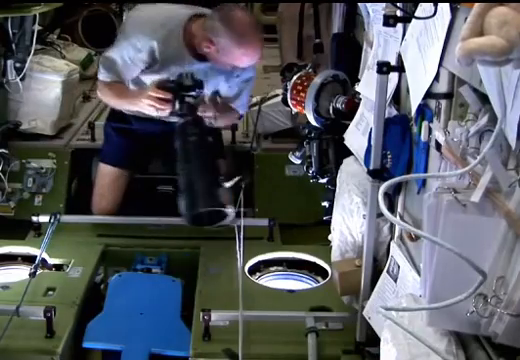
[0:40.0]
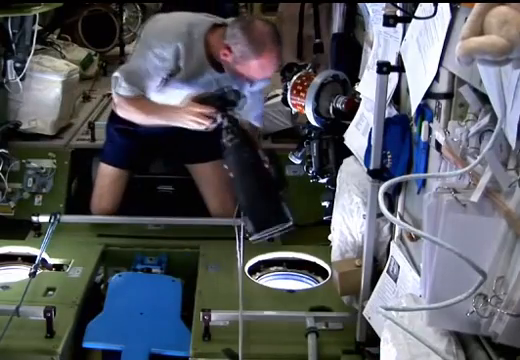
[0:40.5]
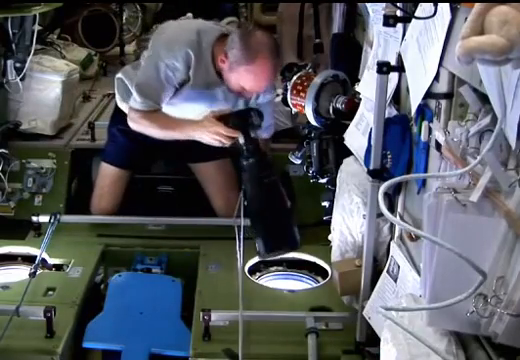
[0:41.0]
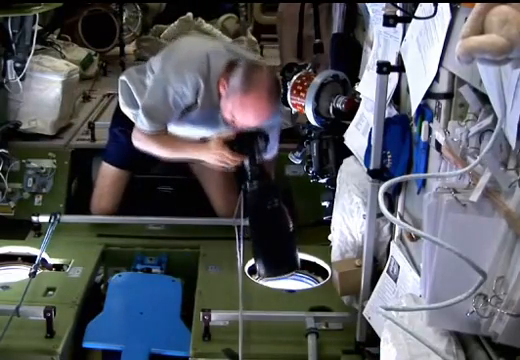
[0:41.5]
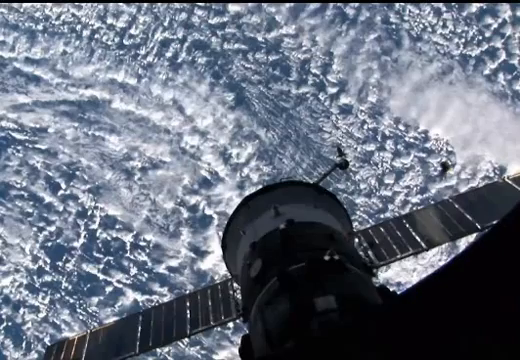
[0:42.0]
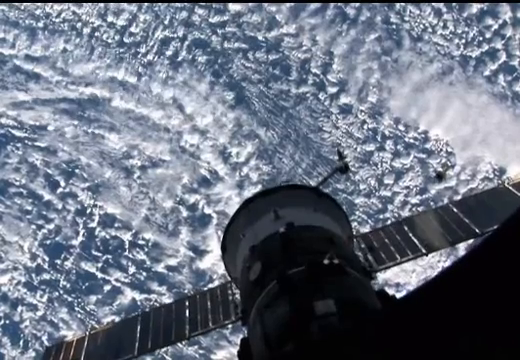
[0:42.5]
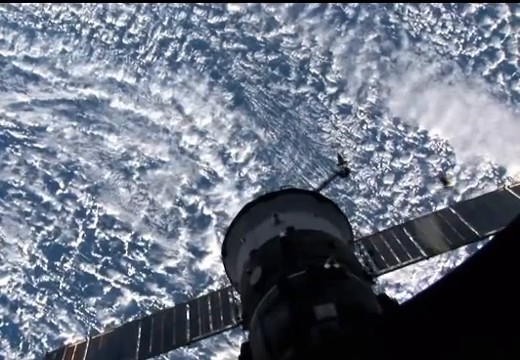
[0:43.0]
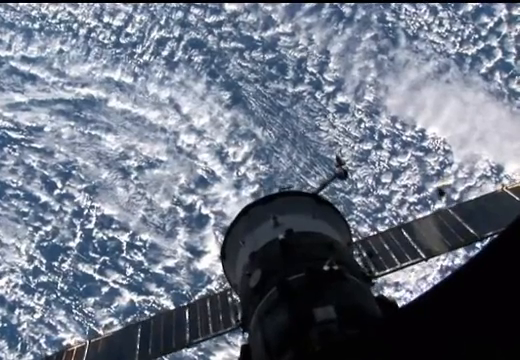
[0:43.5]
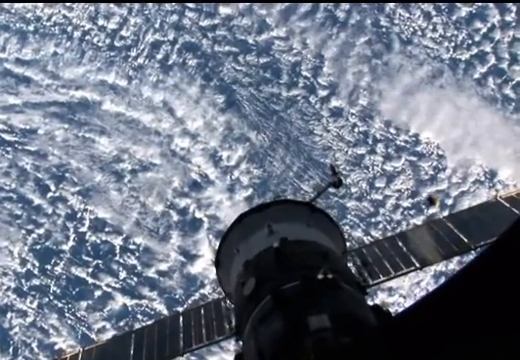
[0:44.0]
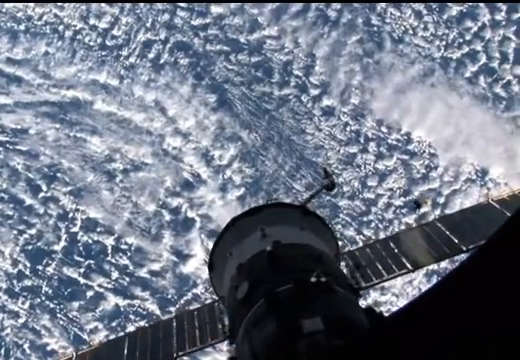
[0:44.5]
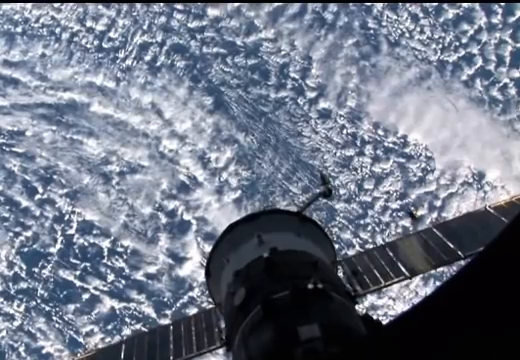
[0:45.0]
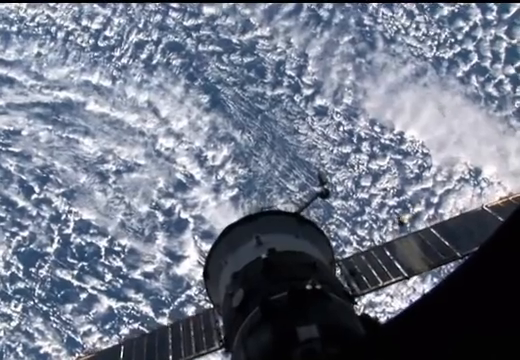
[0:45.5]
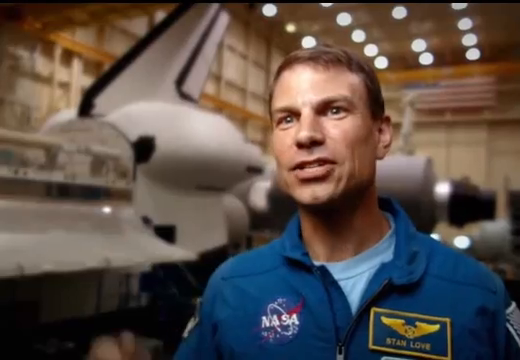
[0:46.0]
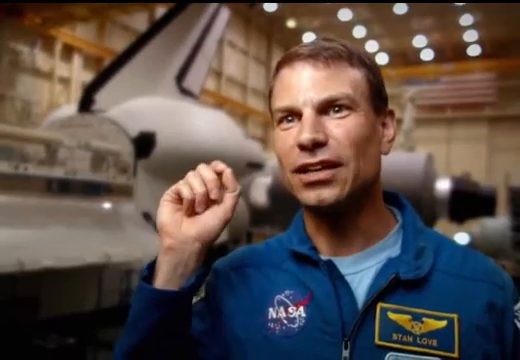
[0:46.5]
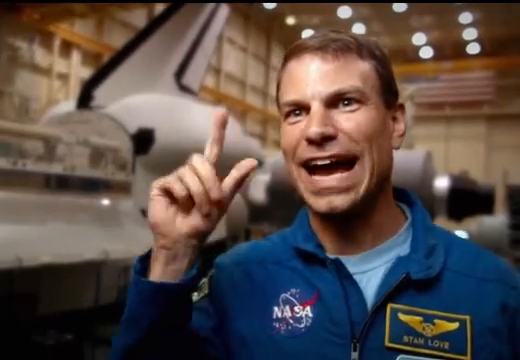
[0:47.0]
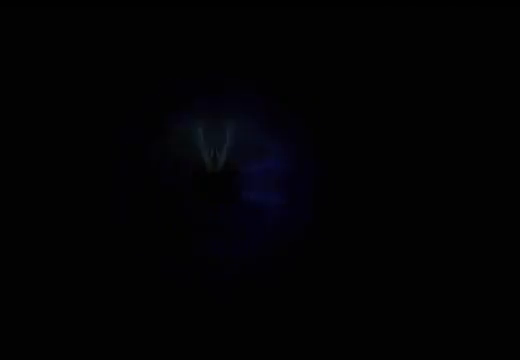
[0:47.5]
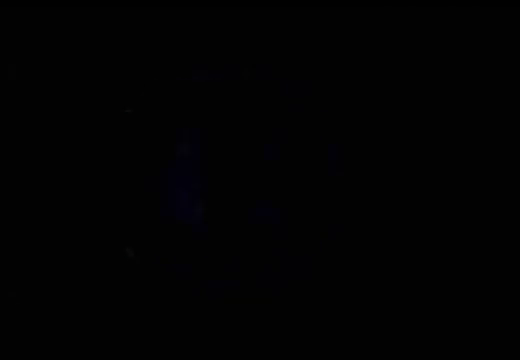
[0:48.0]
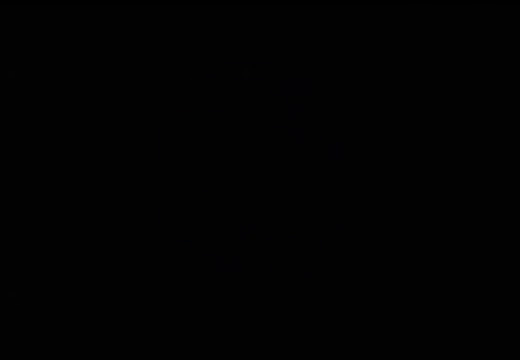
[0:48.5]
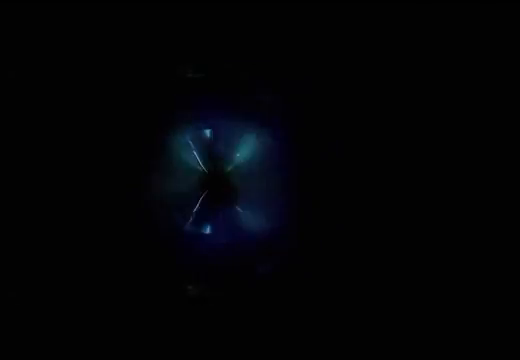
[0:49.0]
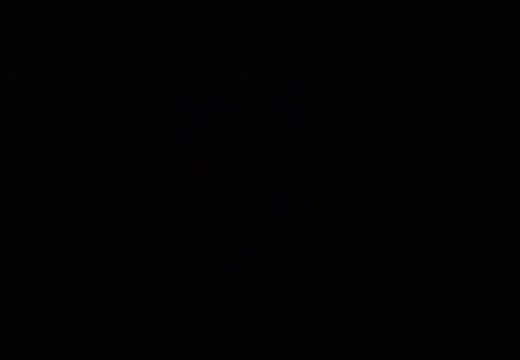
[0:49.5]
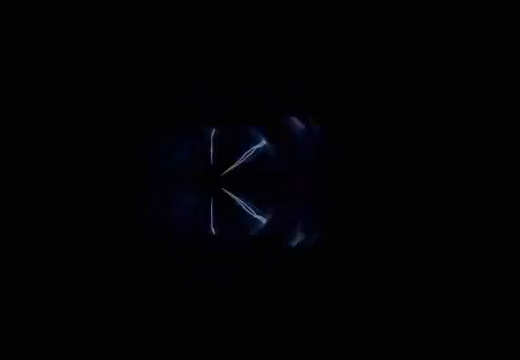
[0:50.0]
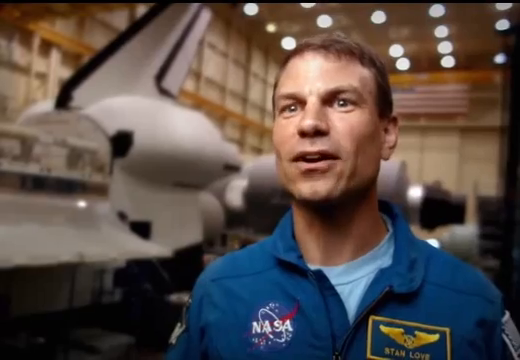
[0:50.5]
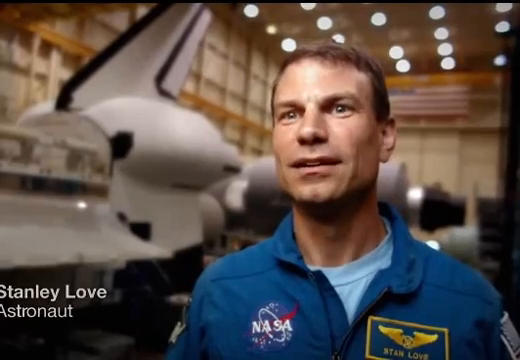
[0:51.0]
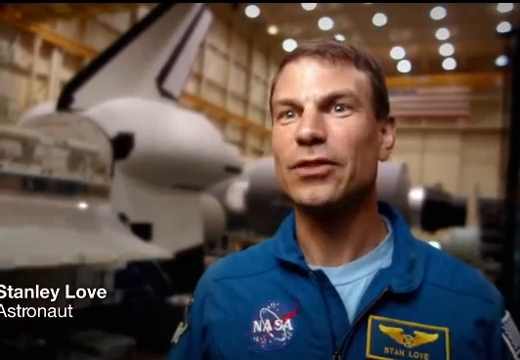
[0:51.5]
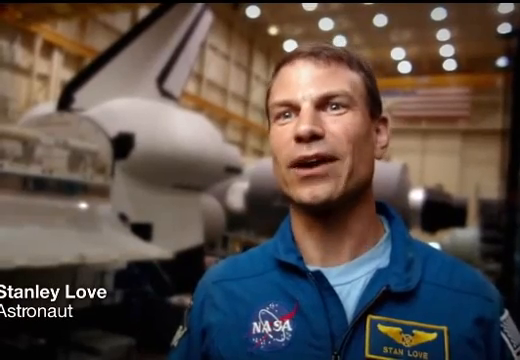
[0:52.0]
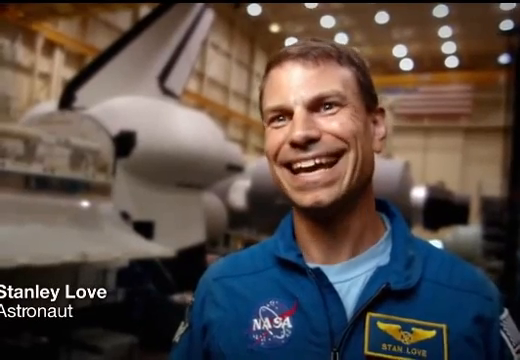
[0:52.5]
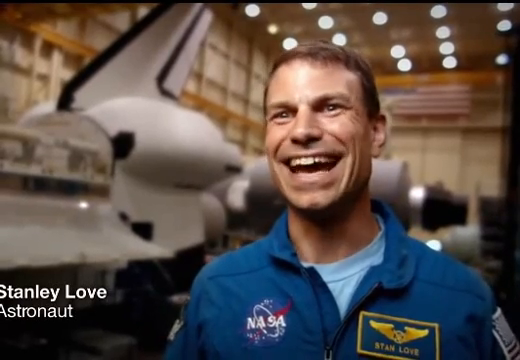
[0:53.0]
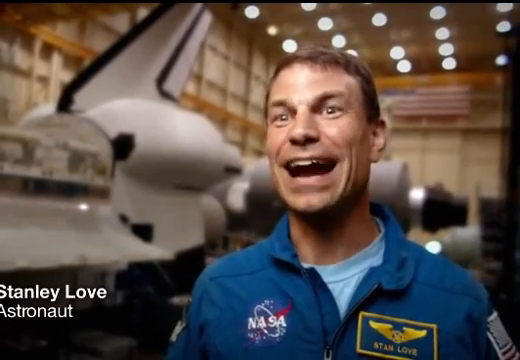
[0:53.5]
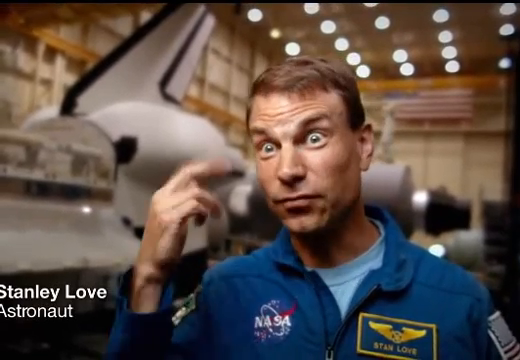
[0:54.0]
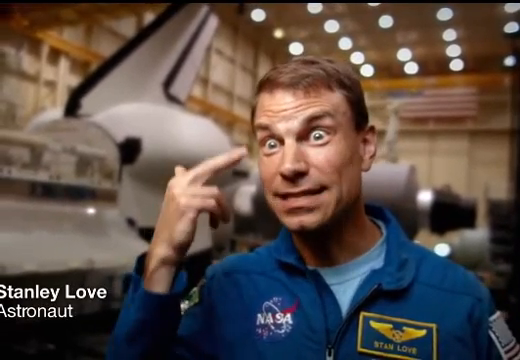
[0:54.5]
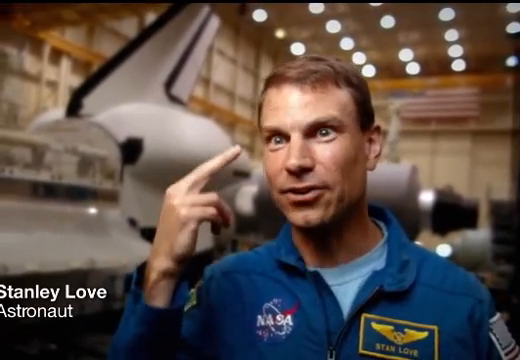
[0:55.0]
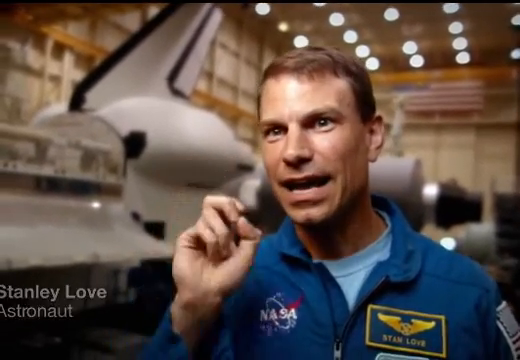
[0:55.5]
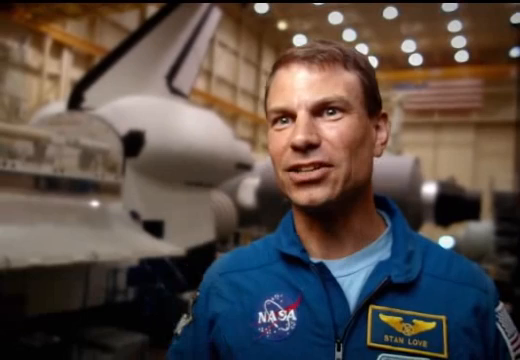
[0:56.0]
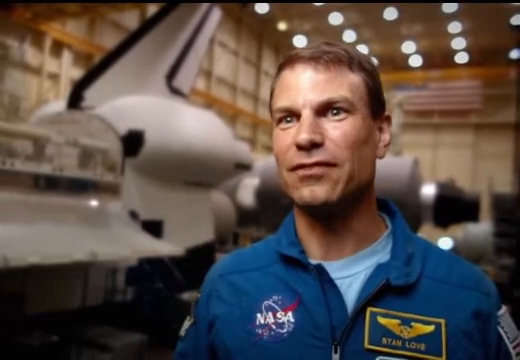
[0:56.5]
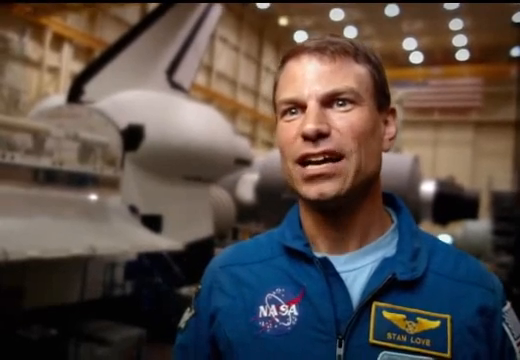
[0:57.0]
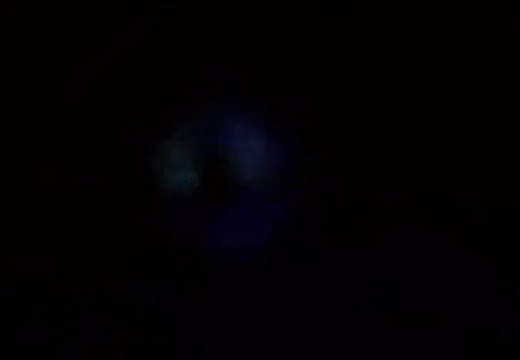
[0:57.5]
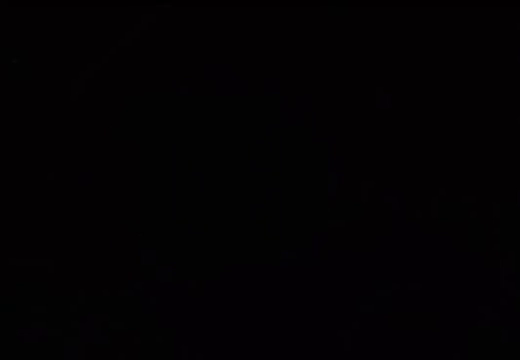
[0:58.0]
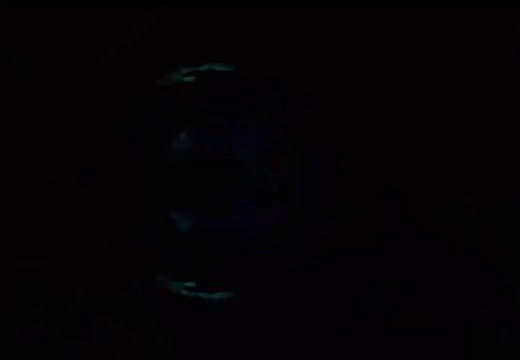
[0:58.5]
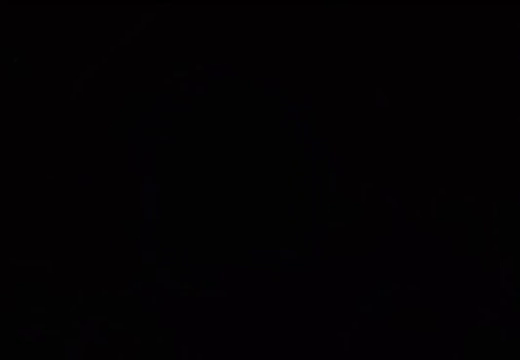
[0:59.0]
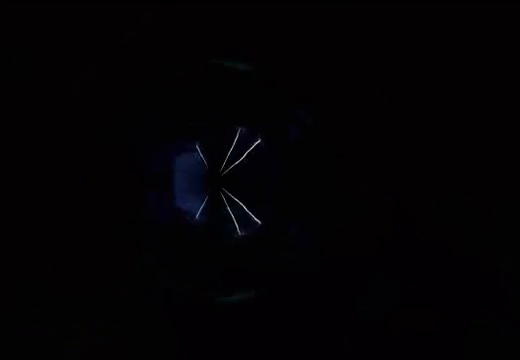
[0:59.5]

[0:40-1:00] The man in black shorts and a gray shirt holds up the black microscope and bends over, getting ready to insert it into one of the holes in the room. A zoomed-out view then shows a surface that looks mostly snow-colored, including white. The view pans out to a man wearing a shirt with the NASA logo on it, who appears to be white Caucasian. Behind him is a very big spaceship, and in the far background are the American flag and several ceiling lights. A round view then shows several bolts of lightning, with the area outside it mostly black. In the lower left-hand corner are the words "Stanley Love, astronaut." The man continues to speak in front of the camera as more lightning is shown in the round view.